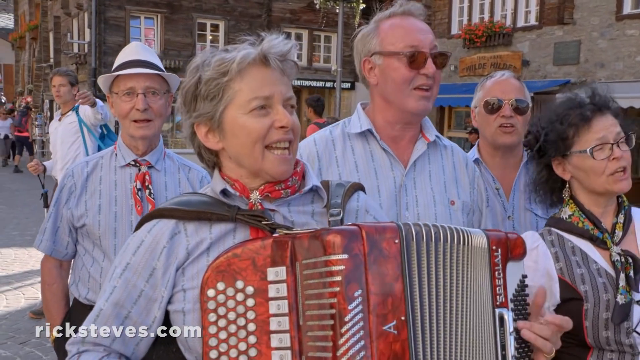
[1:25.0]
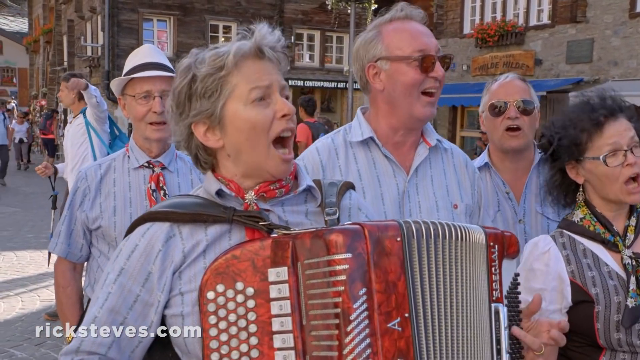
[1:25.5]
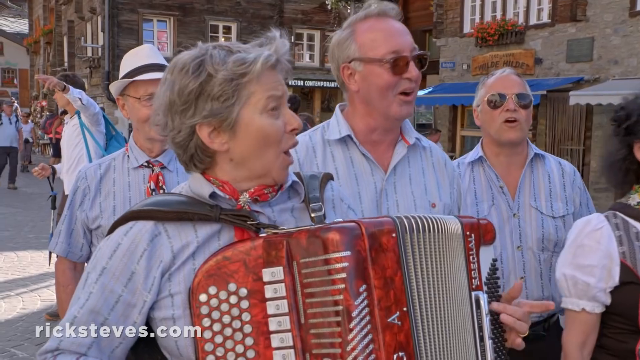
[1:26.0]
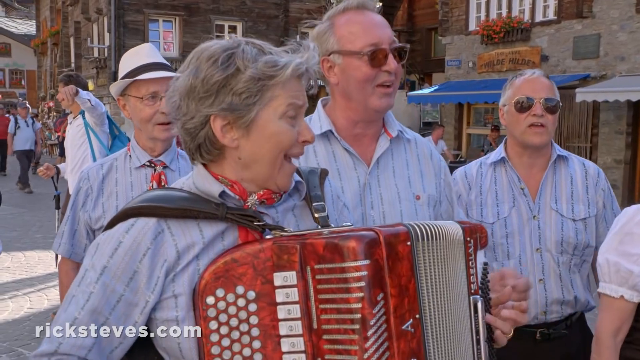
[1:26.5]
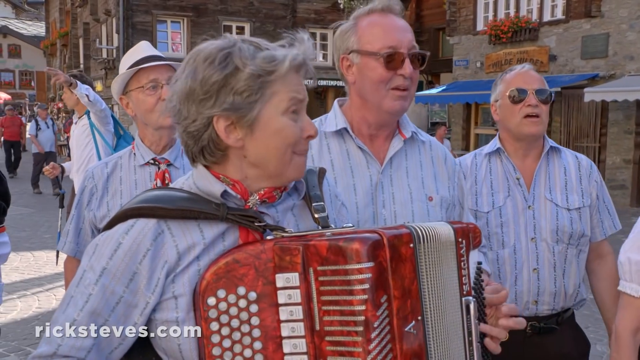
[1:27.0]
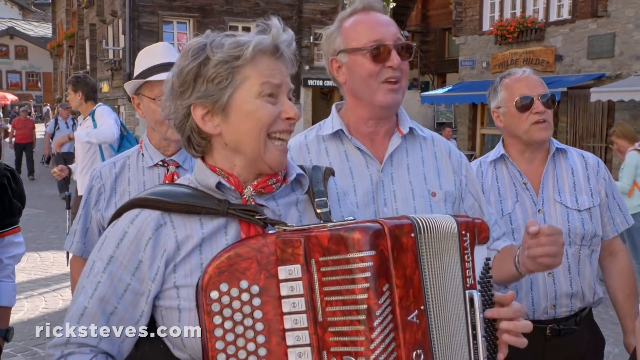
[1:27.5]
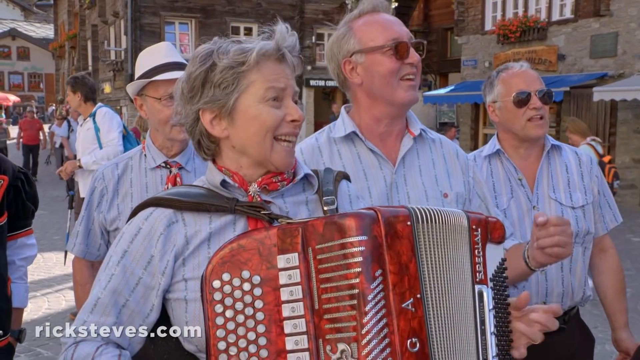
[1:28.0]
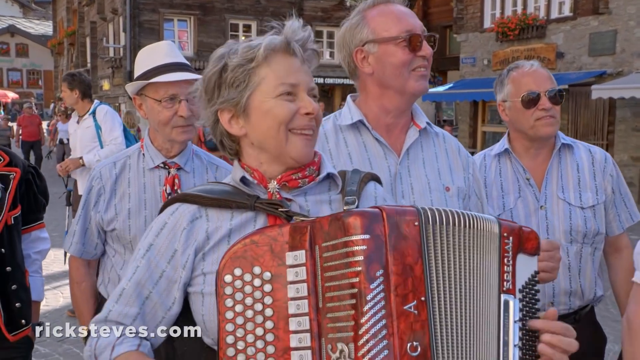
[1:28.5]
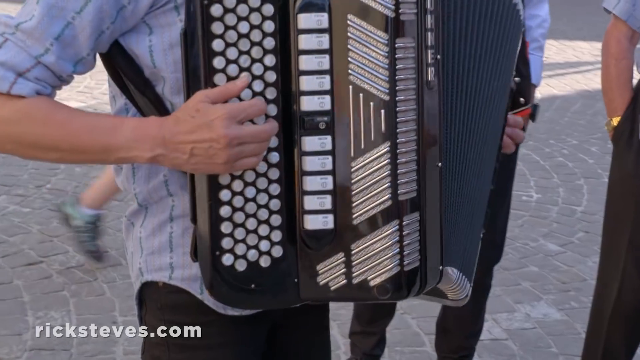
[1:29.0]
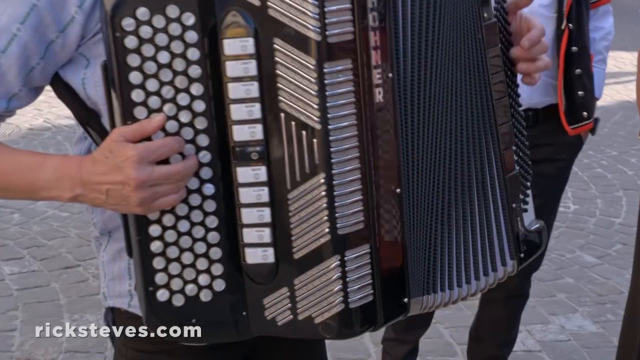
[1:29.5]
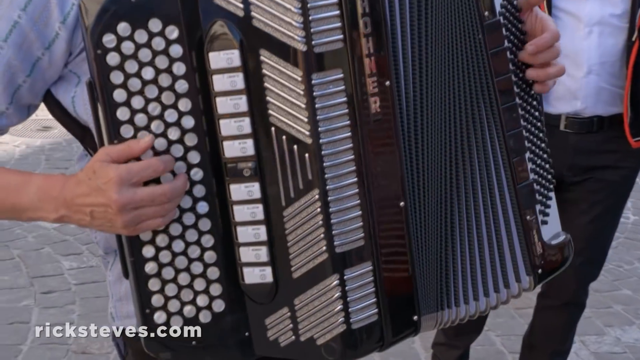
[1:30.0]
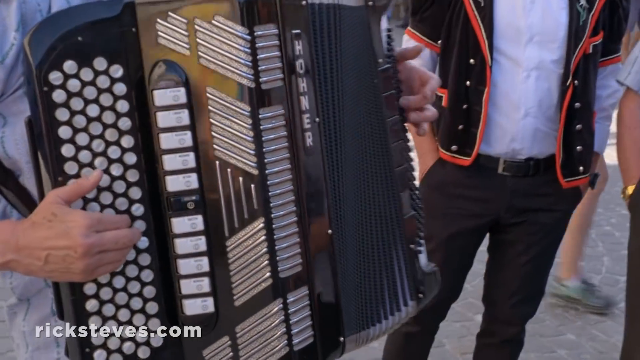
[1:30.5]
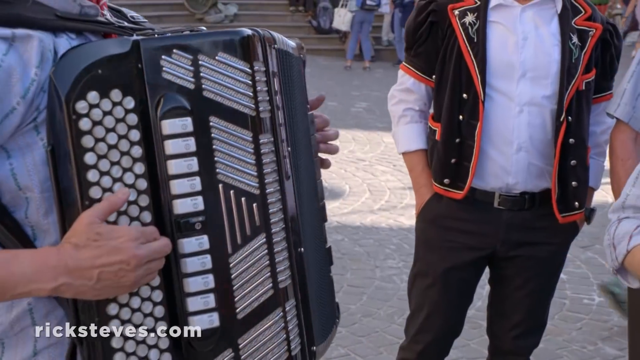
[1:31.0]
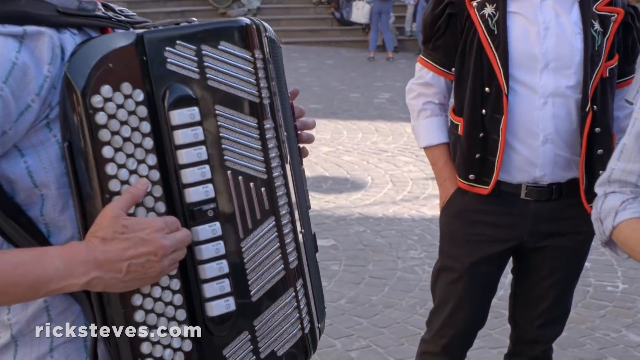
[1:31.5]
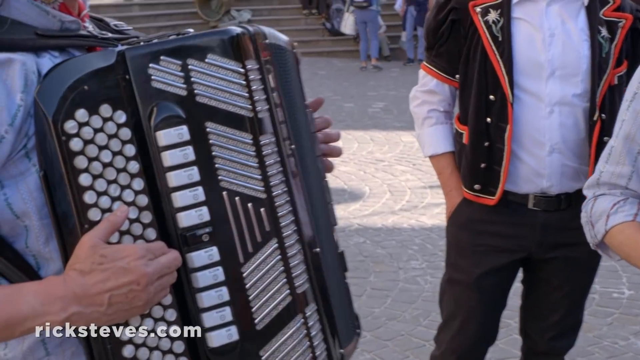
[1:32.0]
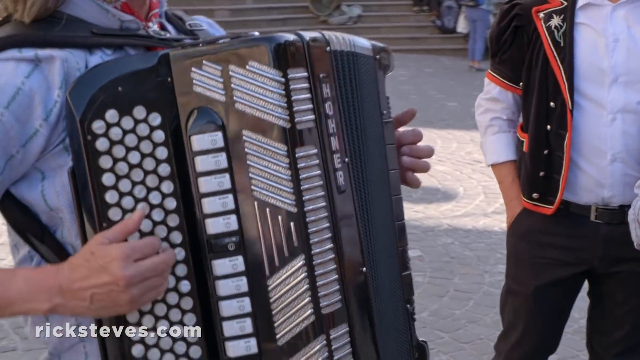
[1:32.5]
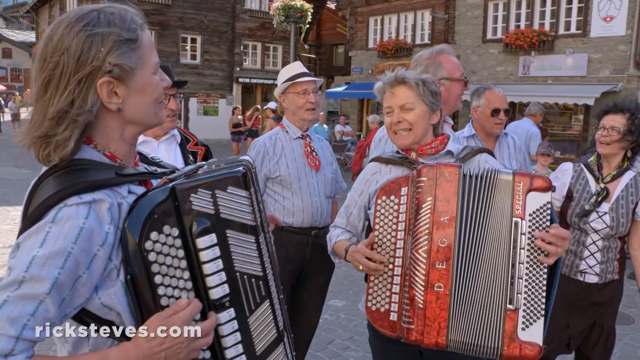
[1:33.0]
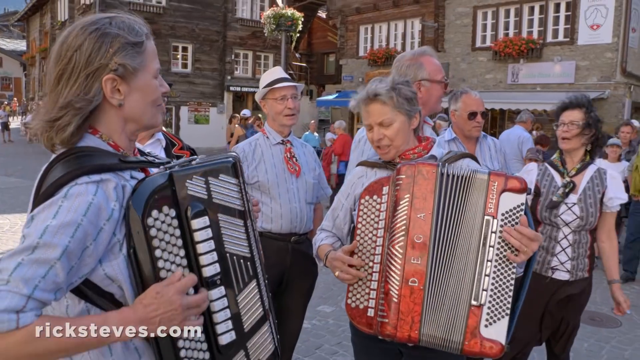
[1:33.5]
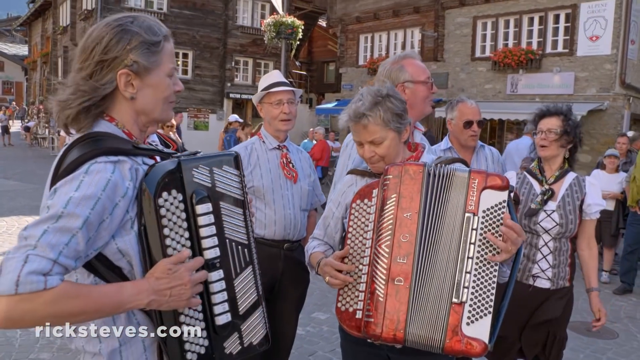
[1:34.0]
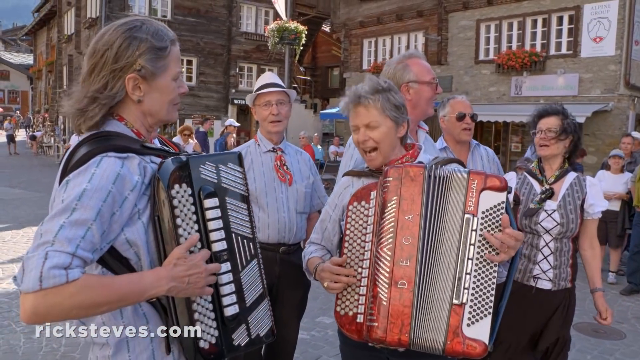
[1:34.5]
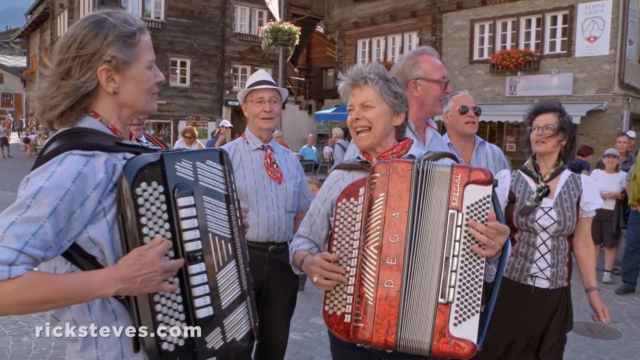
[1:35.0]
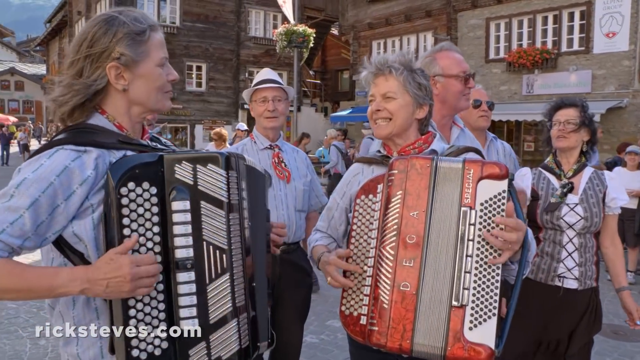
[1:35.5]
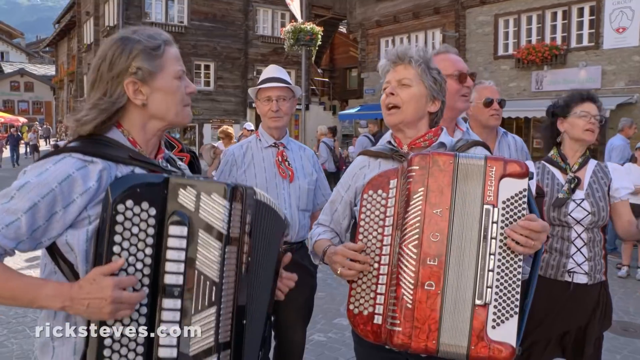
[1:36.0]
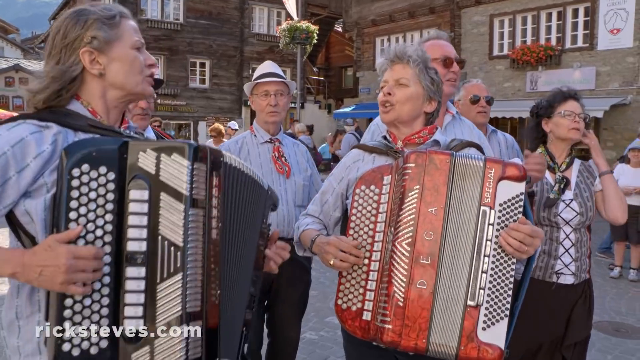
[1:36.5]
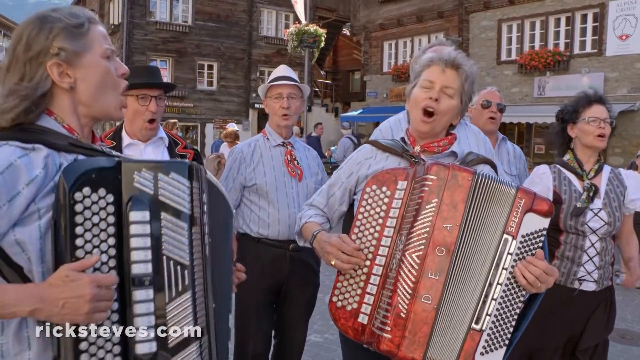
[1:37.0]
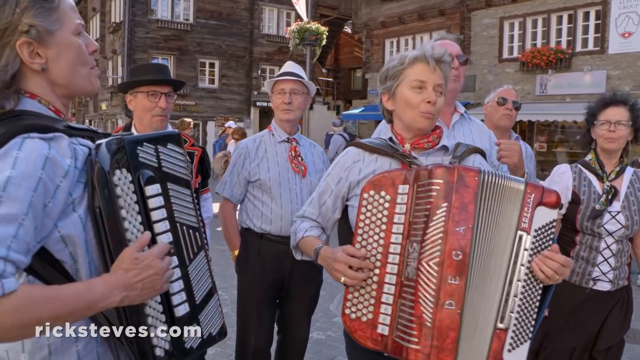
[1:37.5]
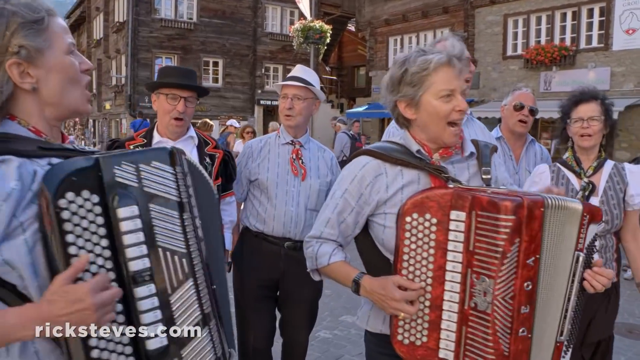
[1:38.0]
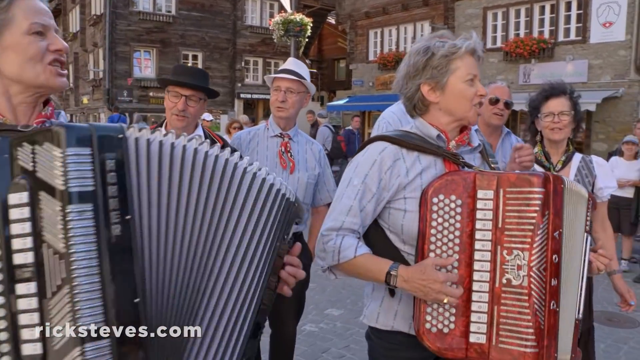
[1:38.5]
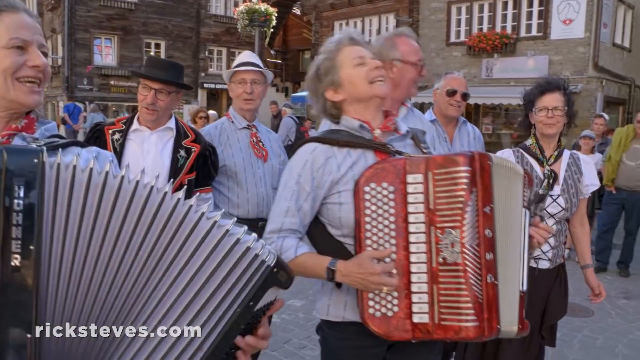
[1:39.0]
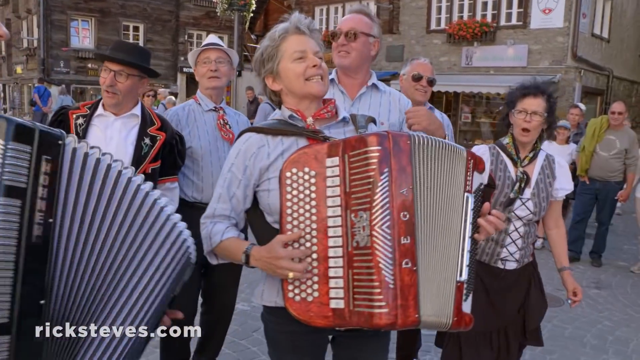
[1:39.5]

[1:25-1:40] The video is about Zermatt, Switzerland, finding charm in the Swiss Alps. A group of musicians performs in the middle of the street, with what appear to be tourists all around. Two women in front each play an accordion, one red and one black. Three or four men stand behind them, and another woman to the side sings. The whole group sings and entertains the crowd, apparently playing their cultural music. They all wear scarves around their necks. People walk up to listen. One of the men wears a small black and red jacket, almost like velvet, that looks like a Swiss cultural costume. The women sing and dance.